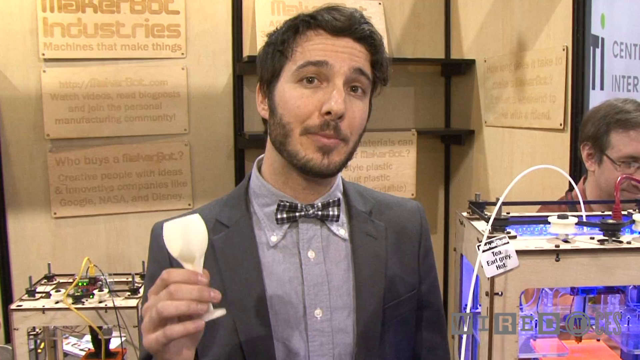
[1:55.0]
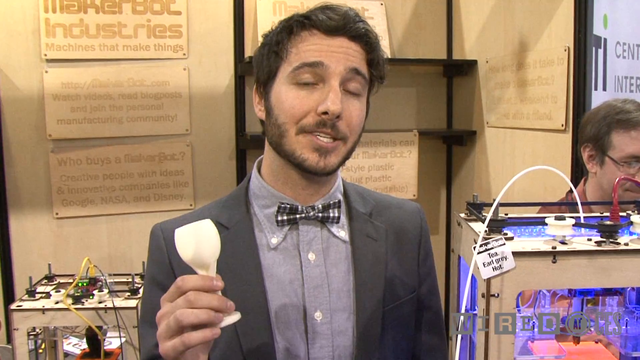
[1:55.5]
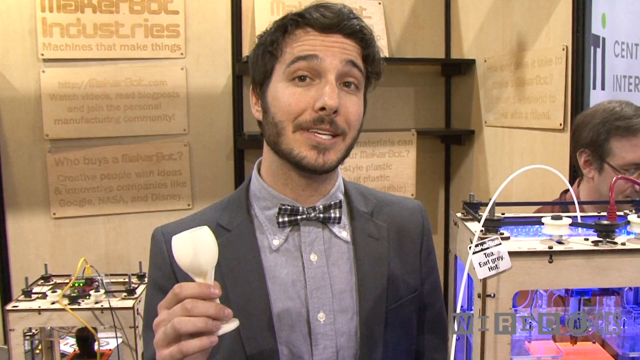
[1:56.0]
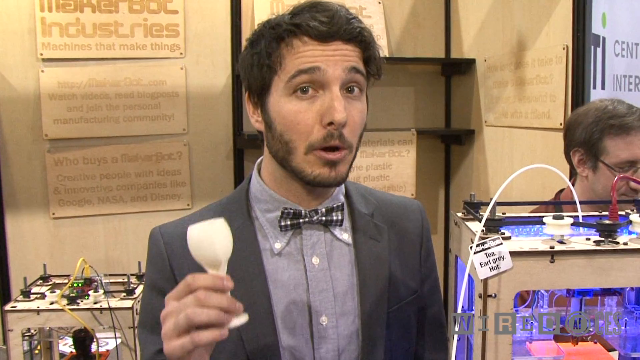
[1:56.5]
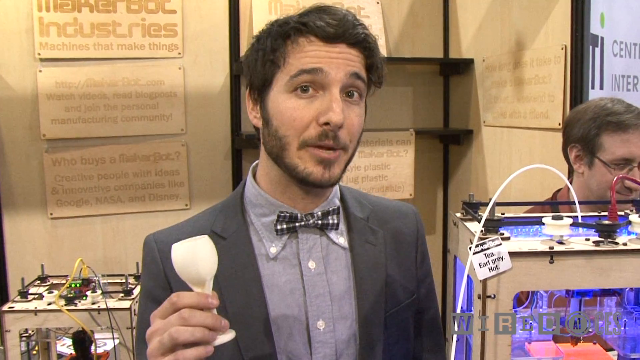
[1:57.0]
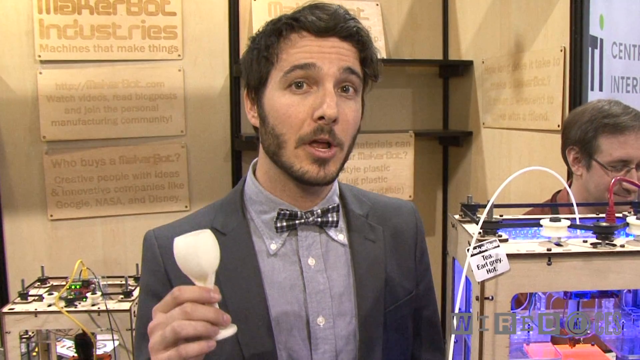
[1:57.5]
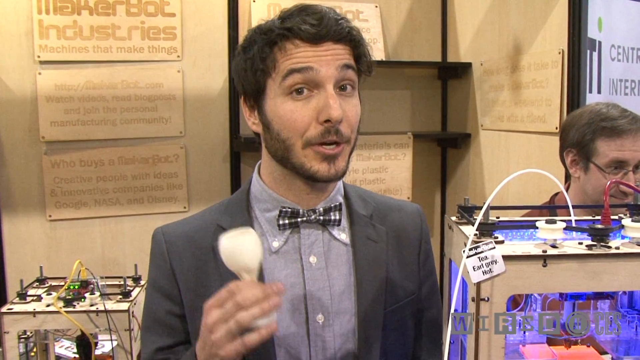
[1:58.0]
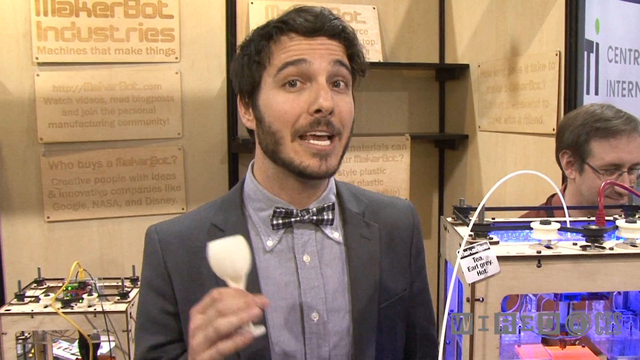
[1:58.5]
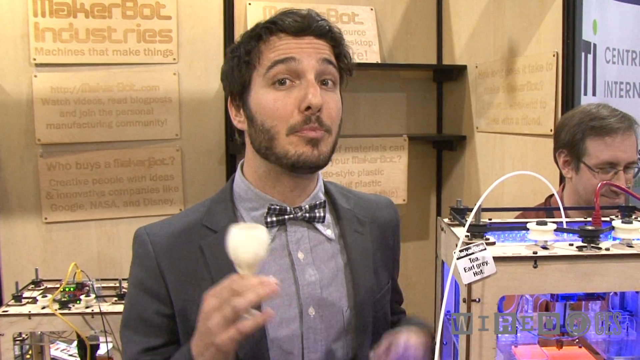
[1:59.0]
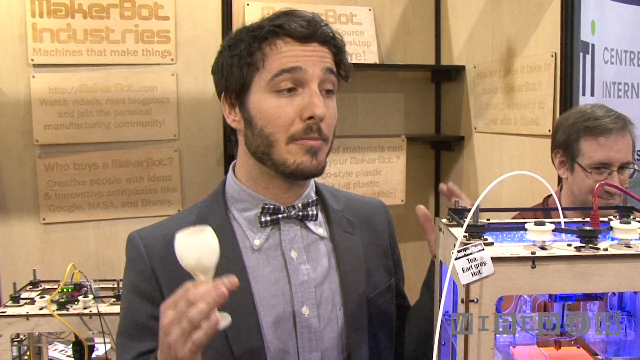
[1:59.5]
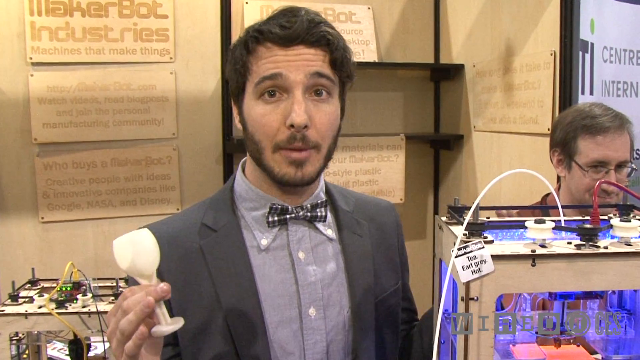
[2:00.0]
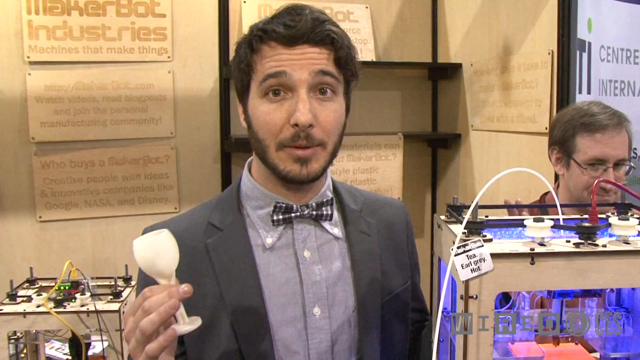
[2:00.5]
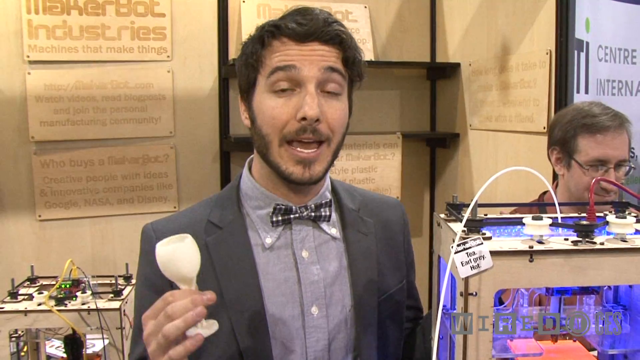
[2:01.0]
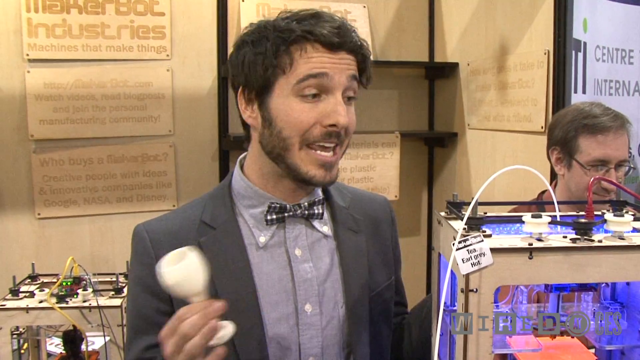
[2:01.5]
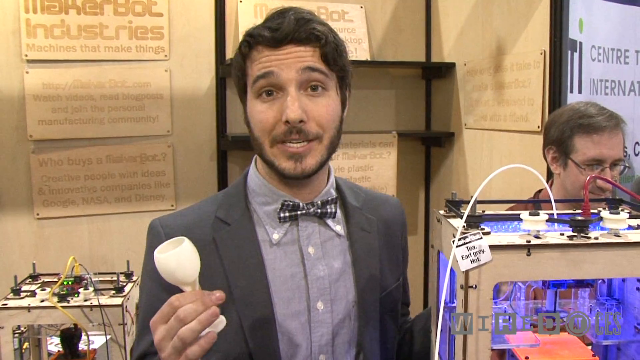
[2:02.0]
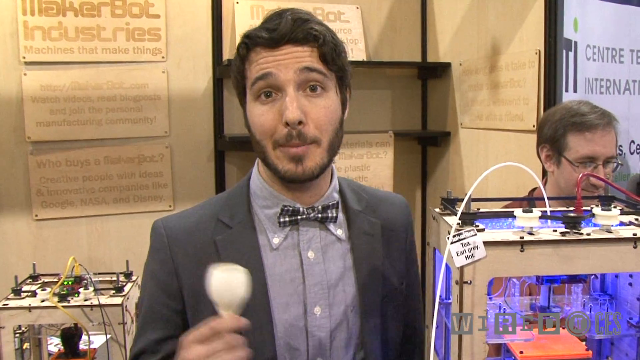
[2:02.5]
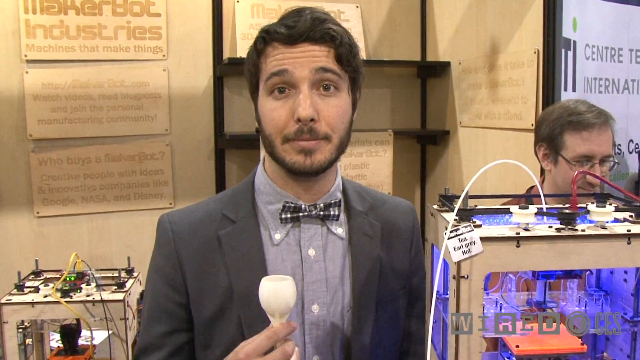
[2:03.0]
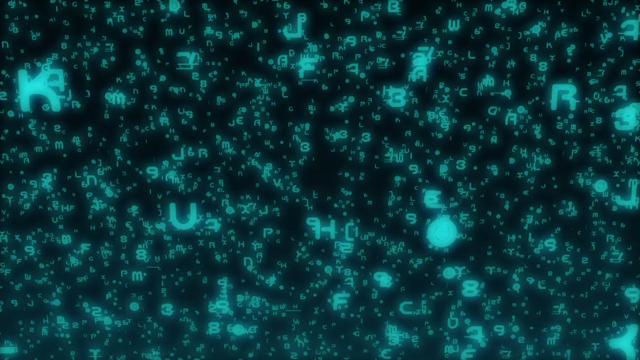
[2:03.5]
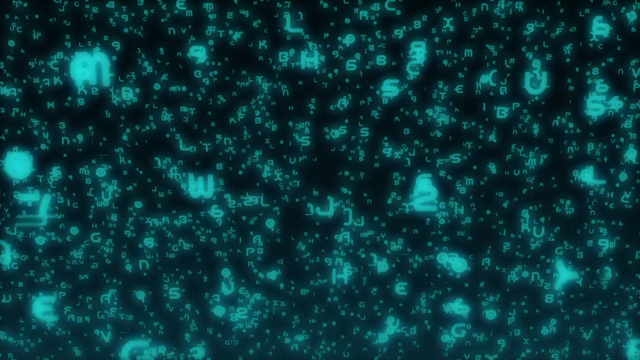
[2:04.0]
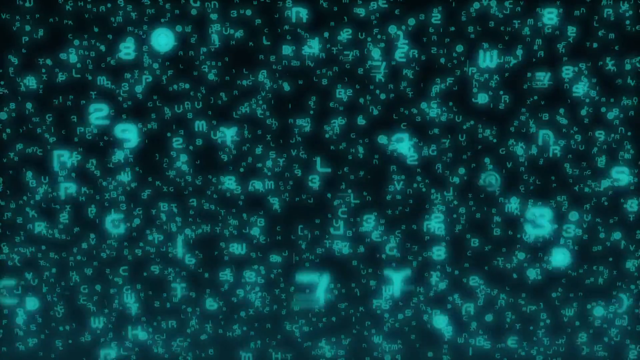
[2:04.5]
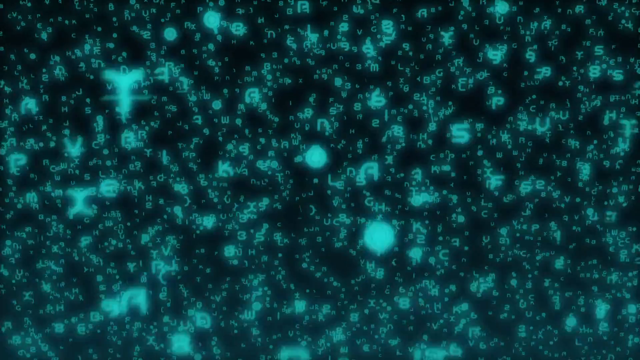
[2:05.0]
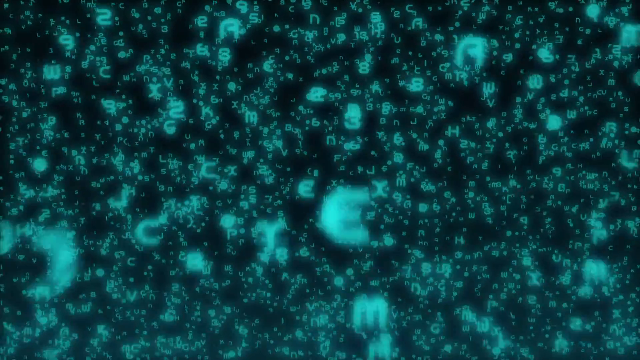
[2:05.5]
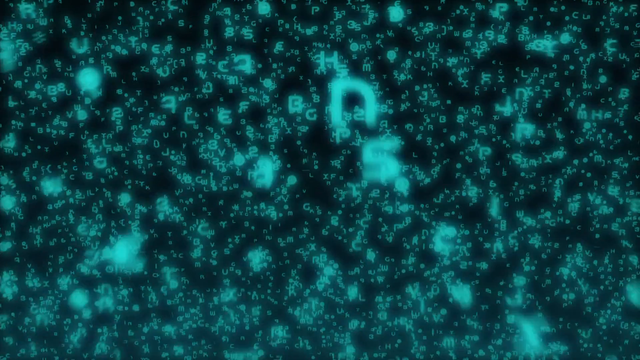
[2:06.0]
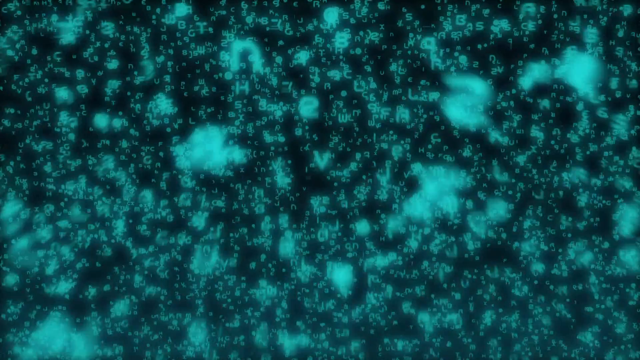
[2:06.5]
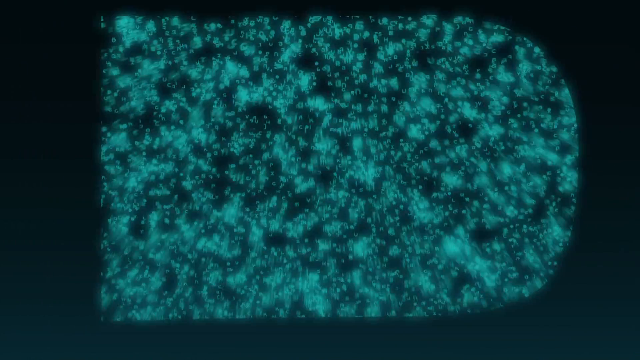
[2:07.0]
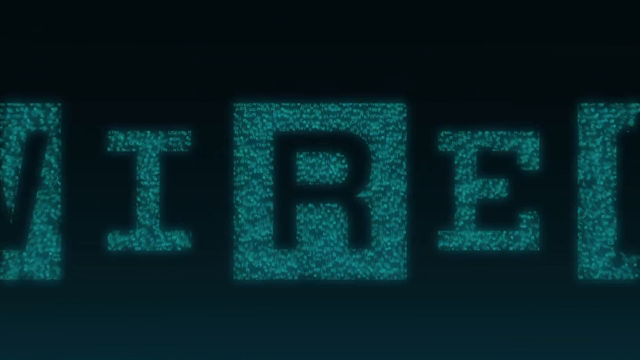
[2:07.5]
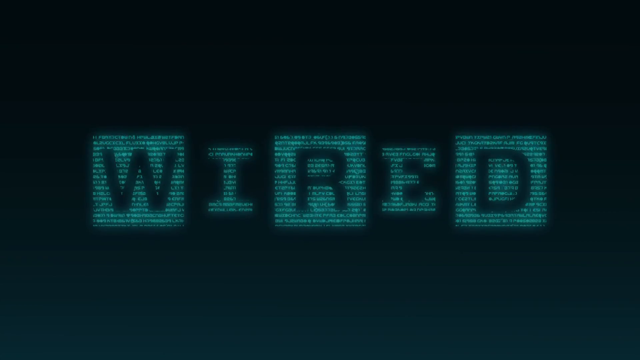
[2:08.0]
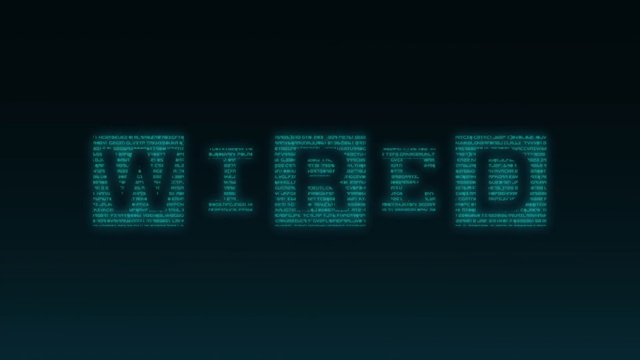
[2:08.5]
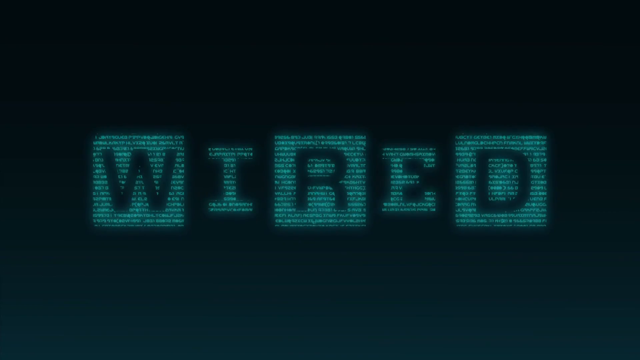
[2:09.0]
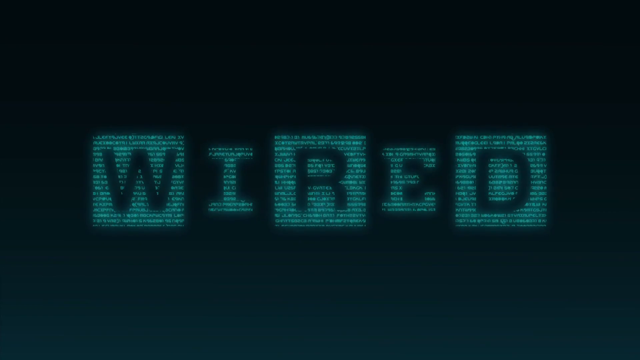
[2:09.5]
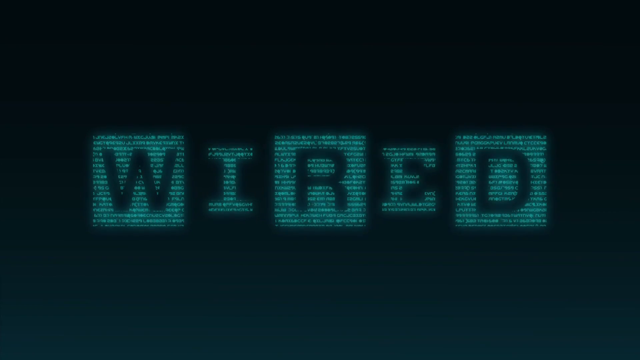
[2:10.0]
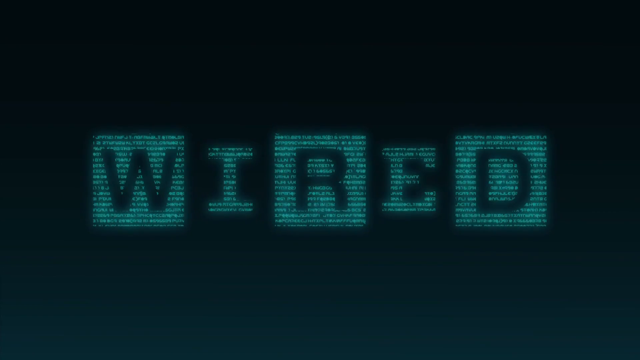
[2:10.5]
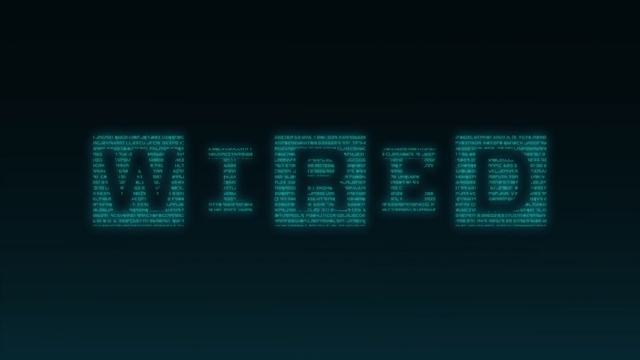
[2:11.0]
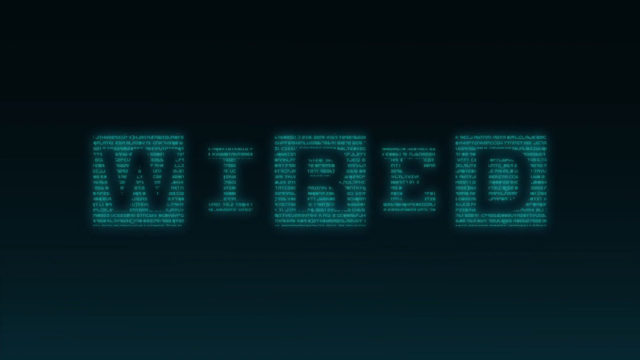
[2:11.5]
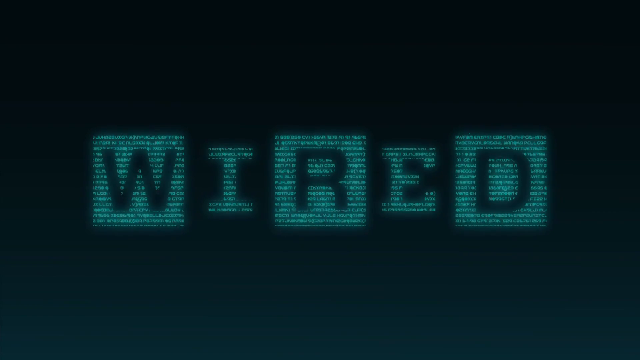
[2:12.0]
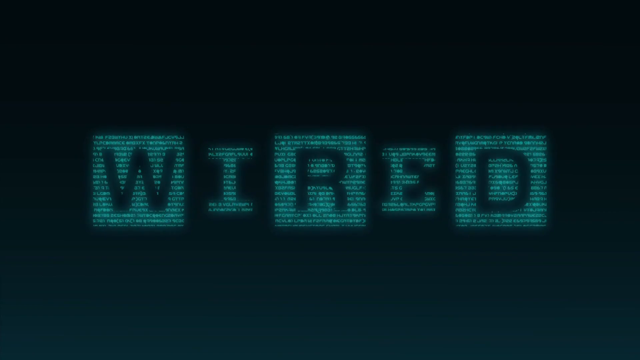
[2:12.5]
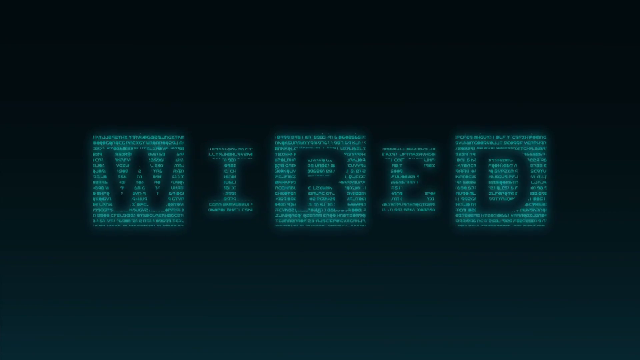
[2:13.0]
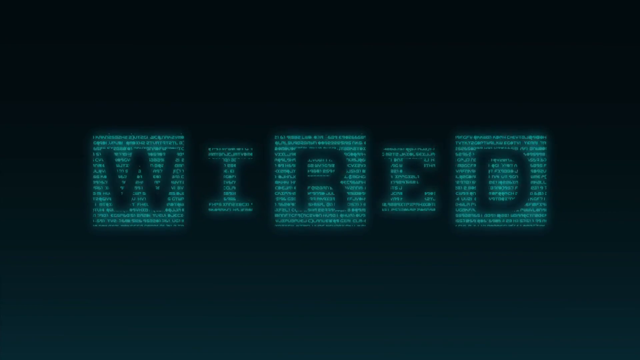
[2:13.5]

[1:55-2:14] The video returns to the speaker, who appears to be wrapping up. He is still holding the same white object, which looks like a bottle or a glass of some sort. The bust of the face is no longer shown. He is in the same position and place, his eyebrows lifted, seemingly genuinely interested, while the machine keeps going next to him. The worker is still behind him. At the end, the Wired logo appears and goes from large to small on the screen.